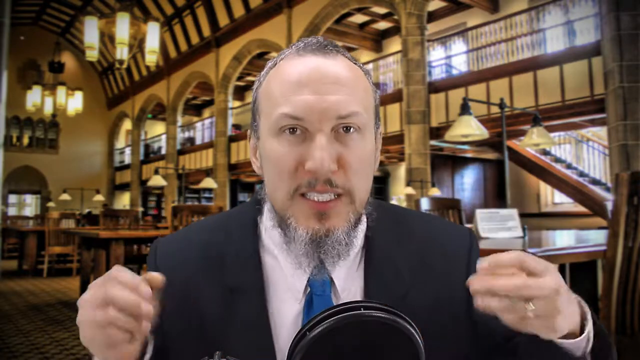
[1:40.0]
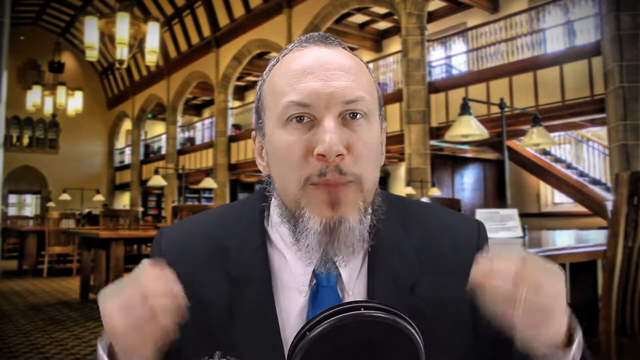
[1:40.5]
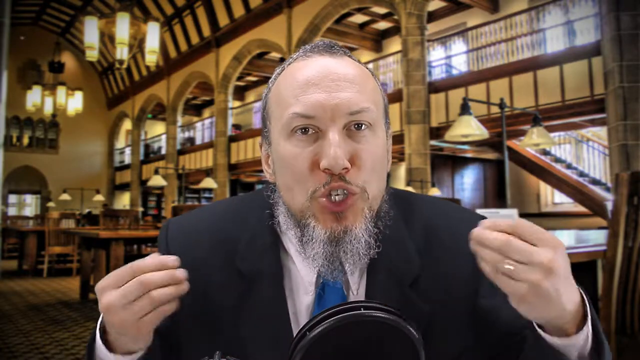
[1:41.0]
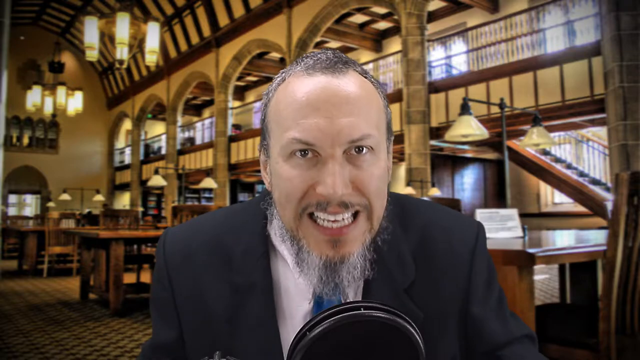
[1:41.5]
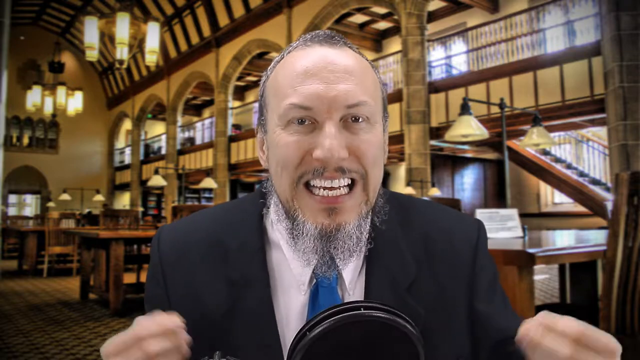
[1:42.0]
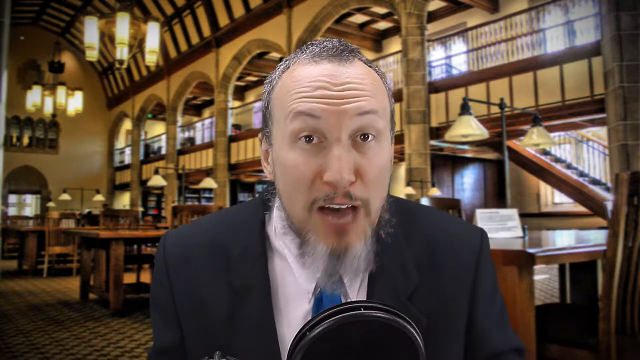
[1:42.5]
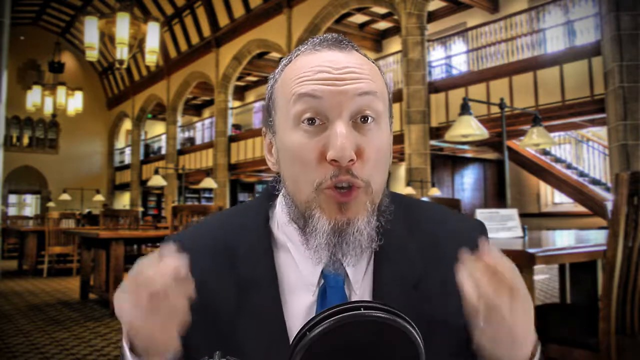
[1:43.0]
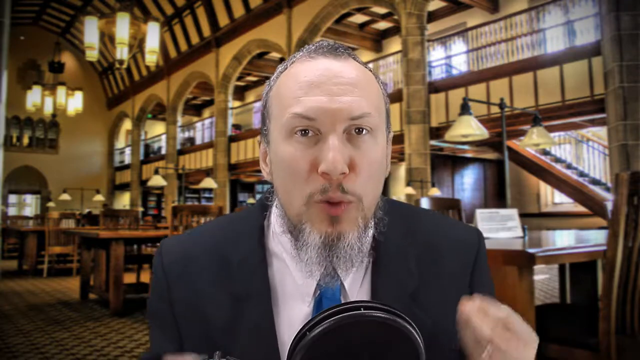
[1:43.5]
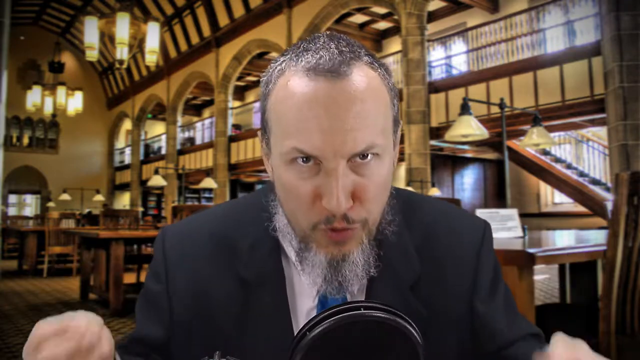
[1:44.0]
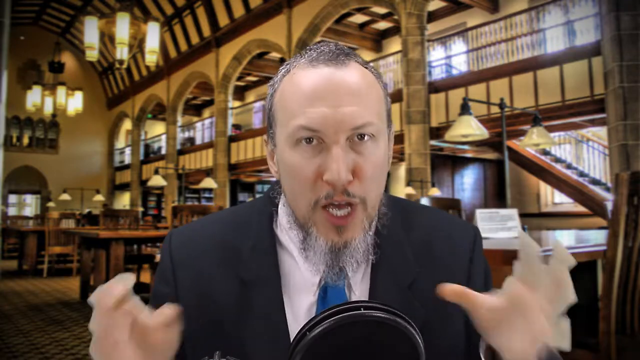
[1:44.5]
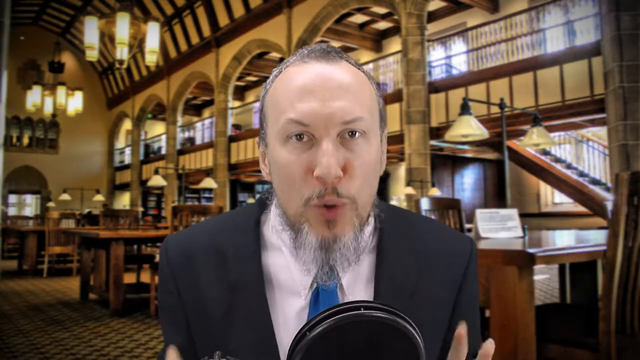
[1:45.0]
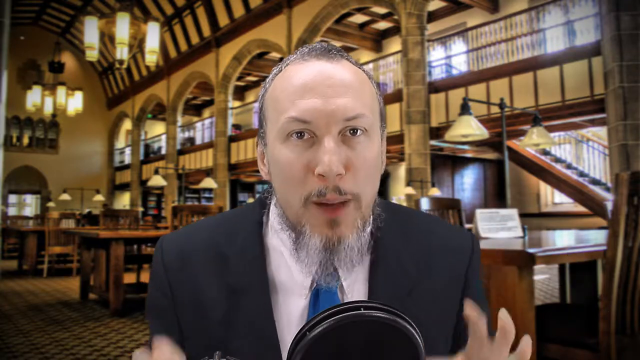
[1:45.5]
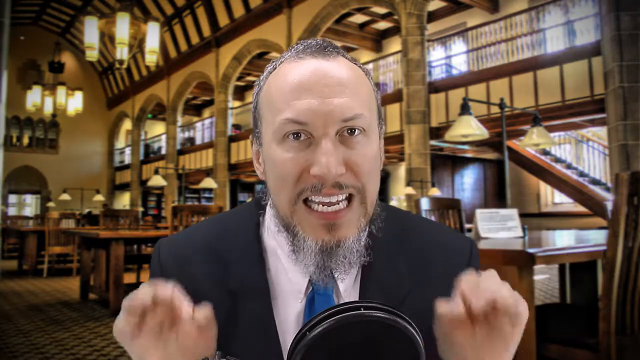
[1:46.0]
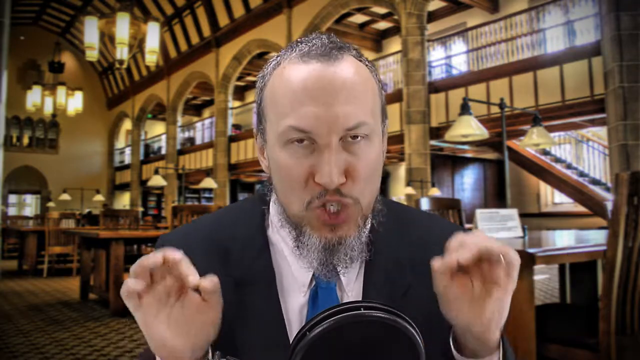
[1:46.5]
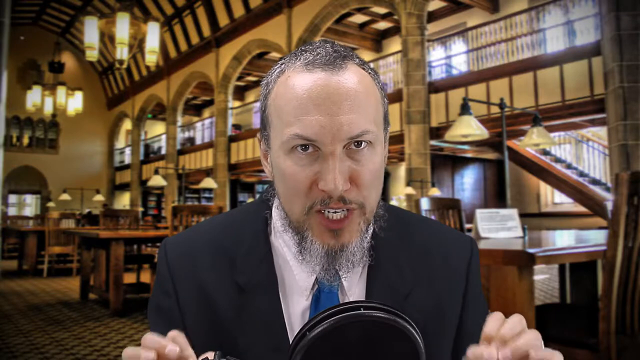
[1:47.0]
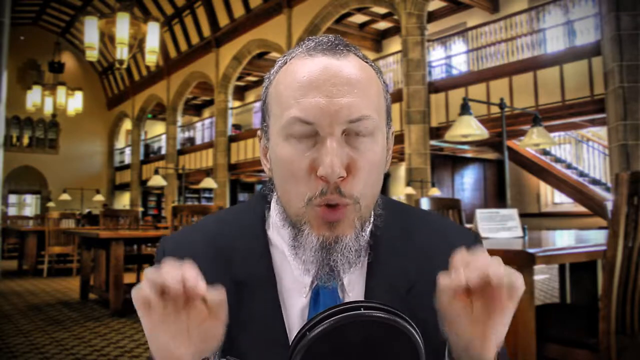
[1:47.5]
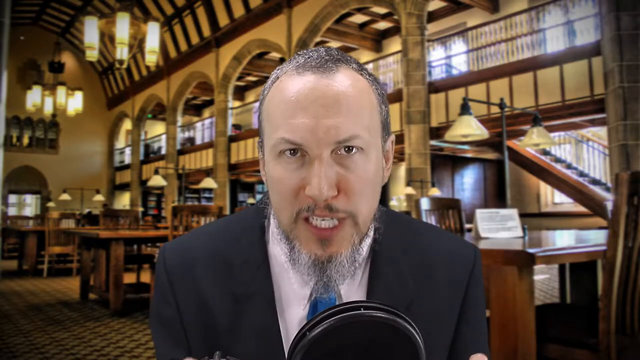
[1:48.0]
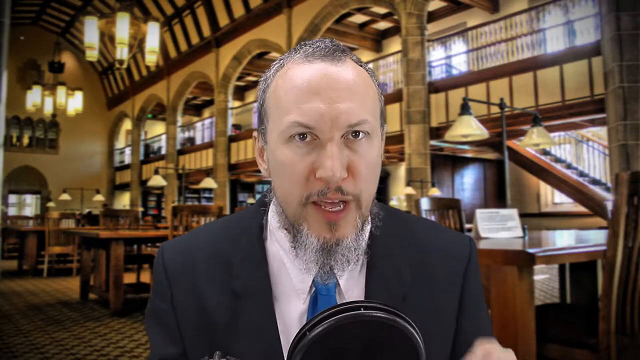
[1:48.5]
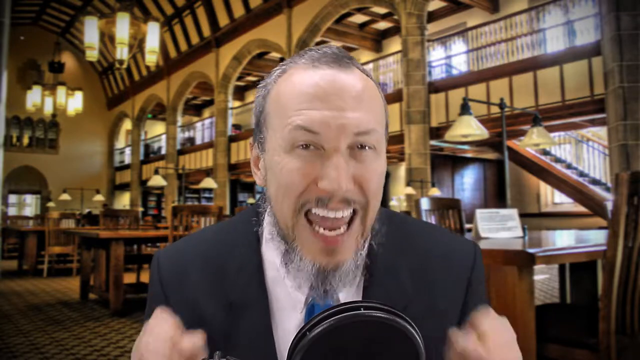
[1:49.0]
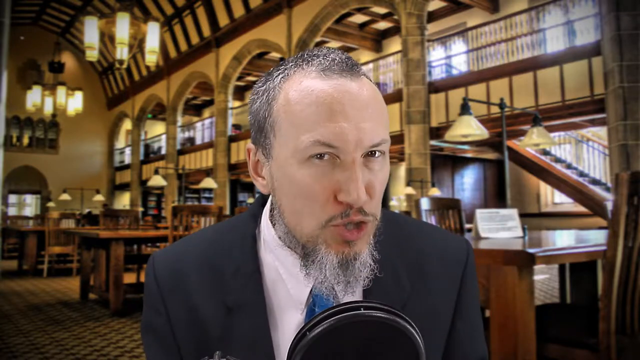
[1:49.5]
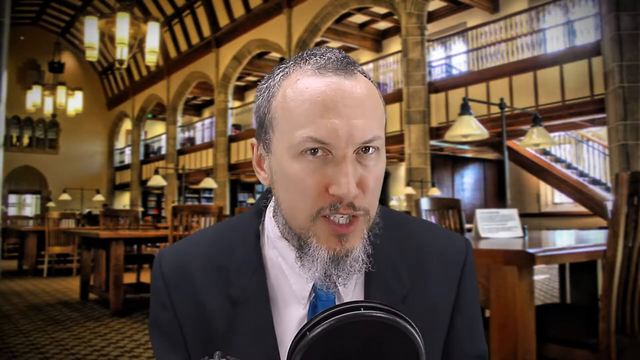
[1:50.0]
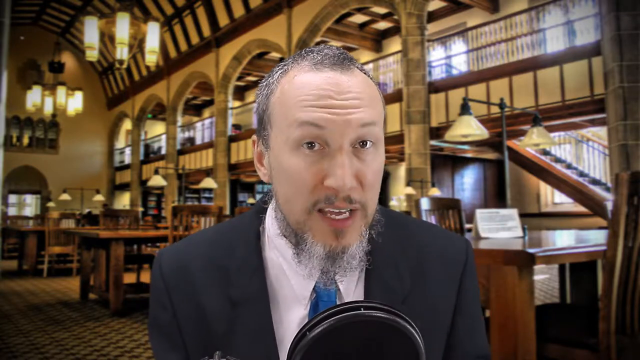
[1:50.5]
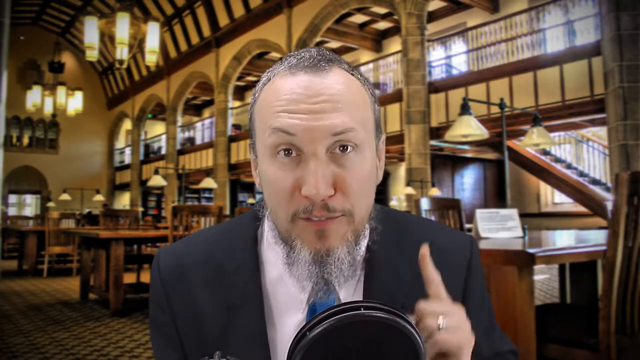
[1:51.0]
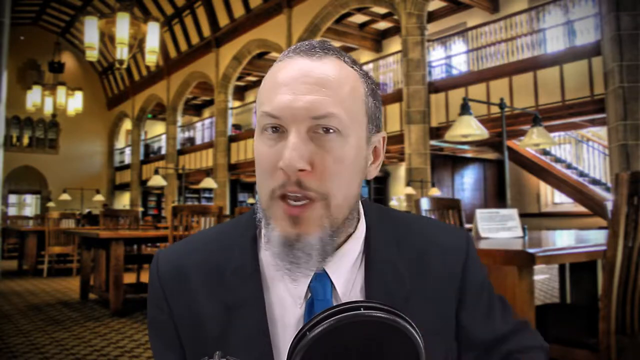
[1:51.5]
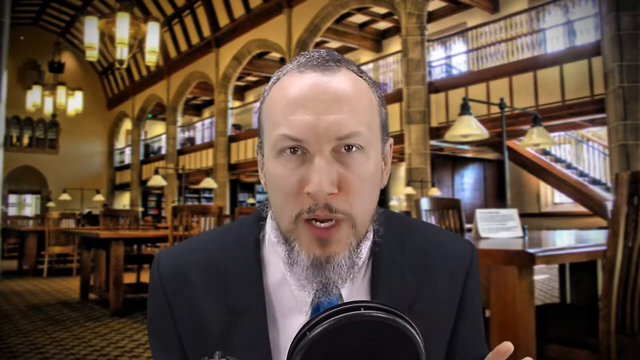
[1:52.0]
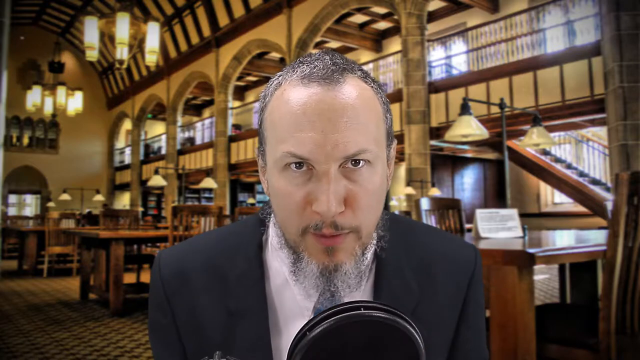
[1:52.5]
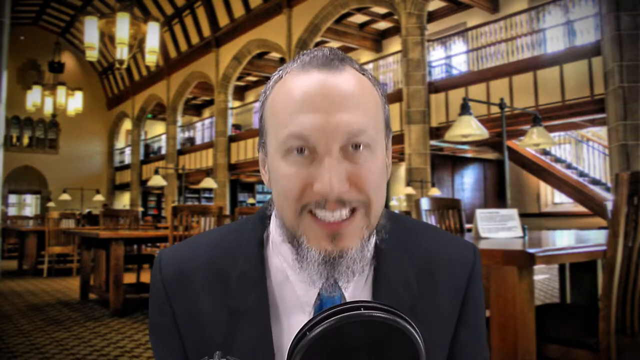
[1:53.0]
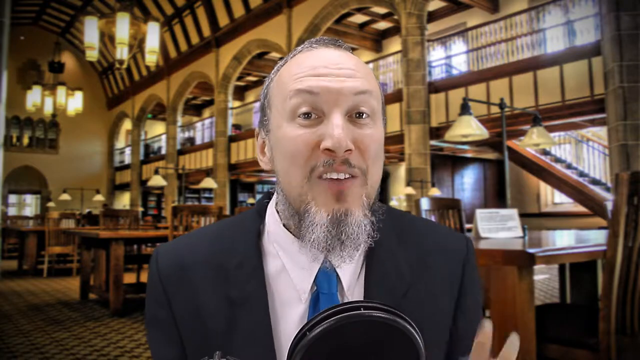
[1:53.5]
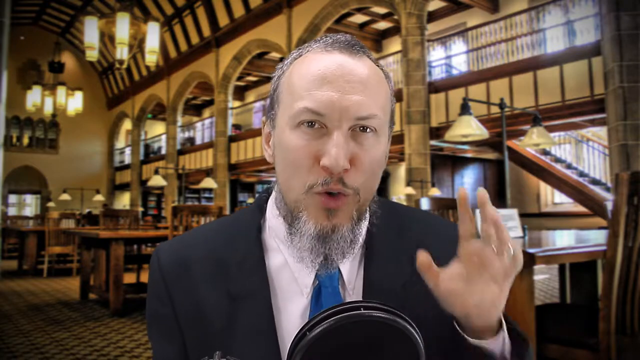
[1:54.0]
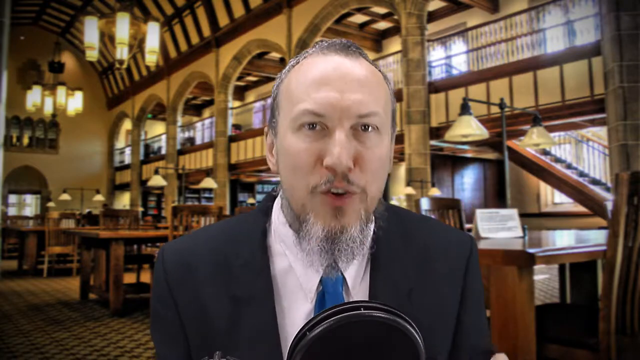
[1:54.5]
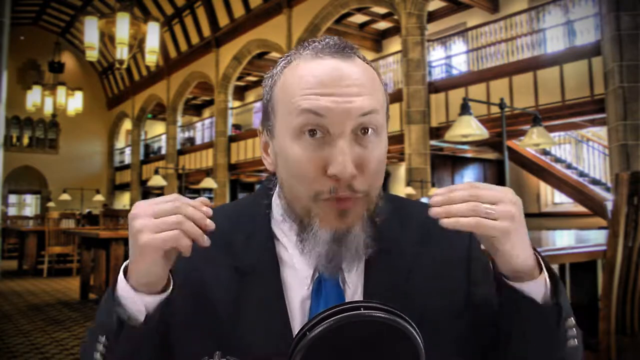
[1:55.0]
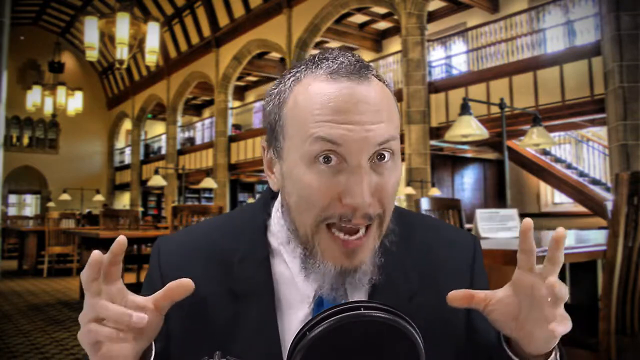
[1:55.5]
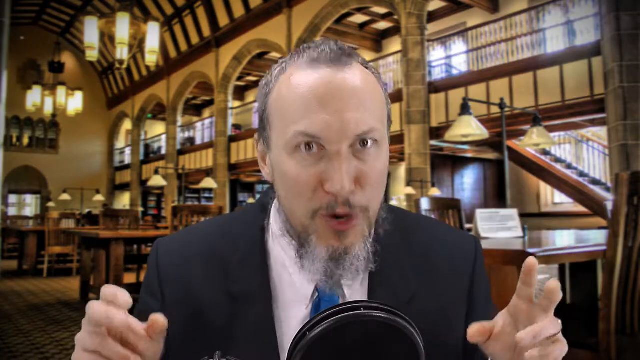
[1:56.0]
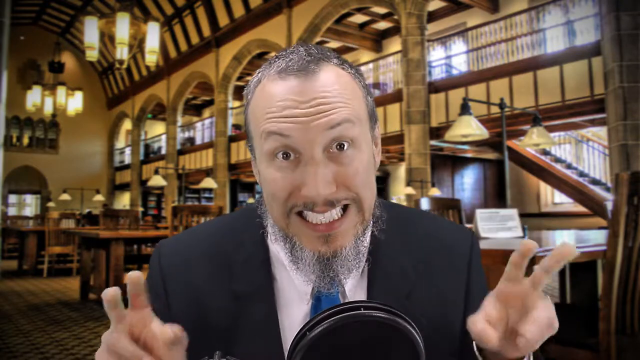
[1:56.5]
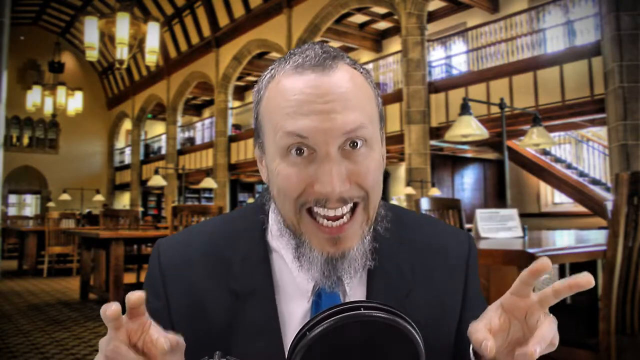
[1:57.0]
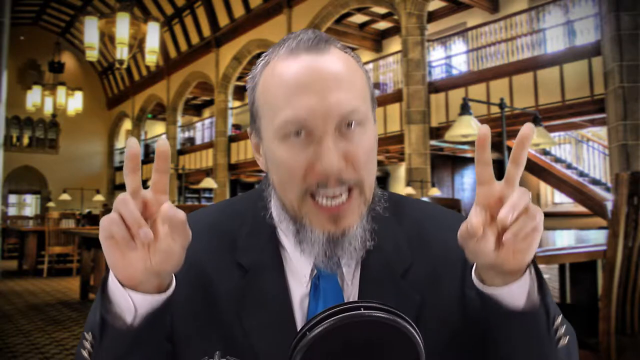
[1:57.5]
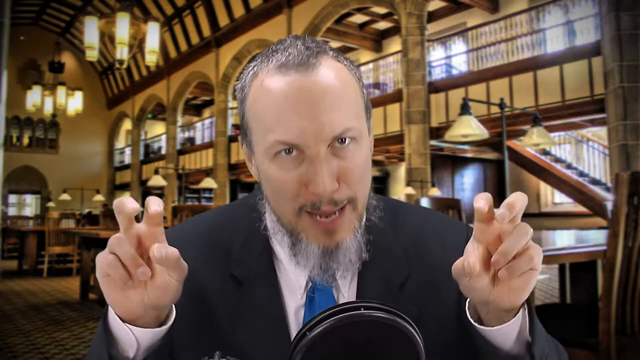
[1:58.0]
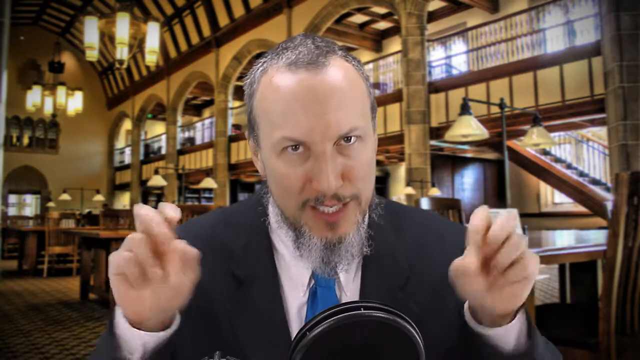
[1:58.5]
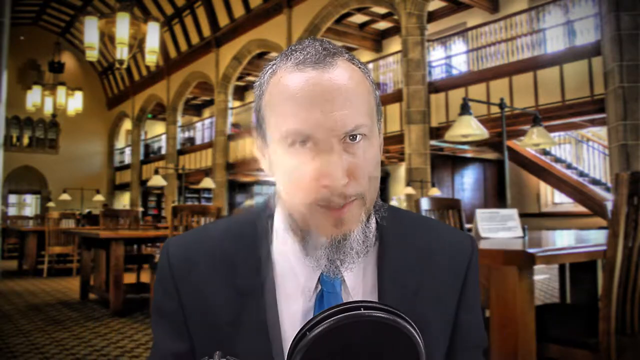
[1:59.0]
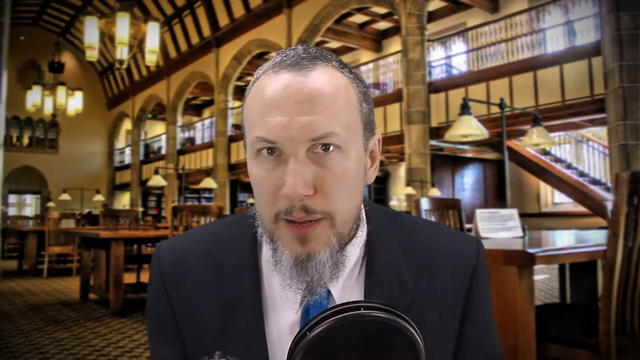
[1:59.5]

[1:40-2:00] The setting is the inside of a large library or study center, with tables in the background and a large cathedral ceiling with large hanging chandeliers. A man in the foreground wears a dark suit, a white shirt and a very bright blue tie. He speaks into what looks like a round, plate-sized microphone in front of him, in a very animated way, with his hands up beside him. His facial expressions are very sharp and obvious as he purses his lips, squints his eyes, moves his head around in a disapproving fashion and shakes his fingers, appearing very angry. He has light gray mixed into his short hair on top and a short scruffy beard that is mostly gray, yet he only looks to be about 35.